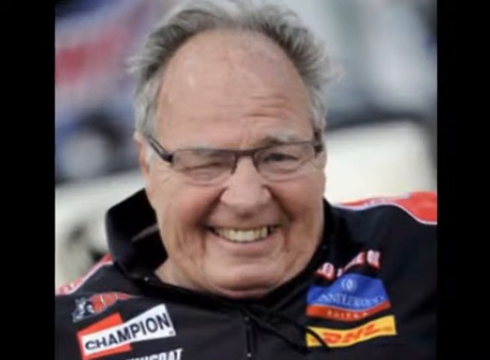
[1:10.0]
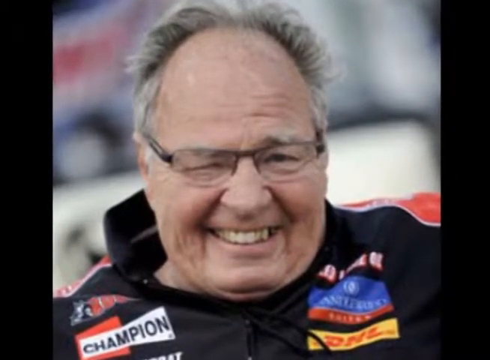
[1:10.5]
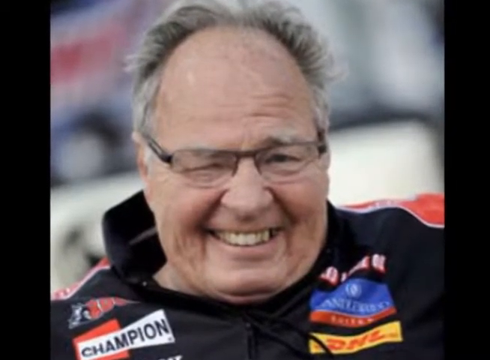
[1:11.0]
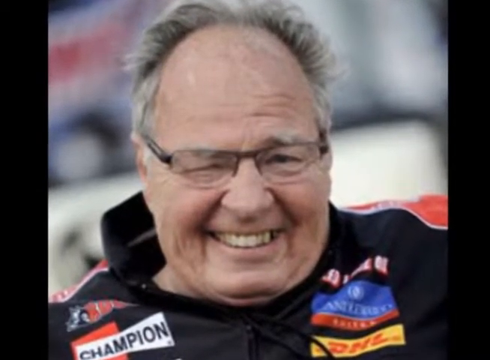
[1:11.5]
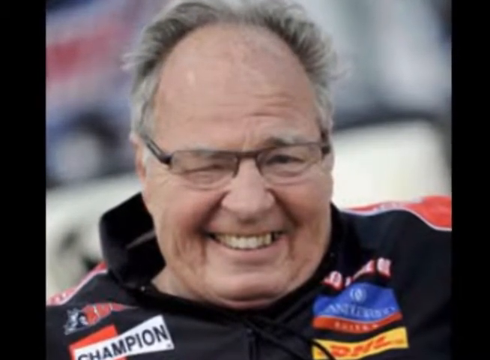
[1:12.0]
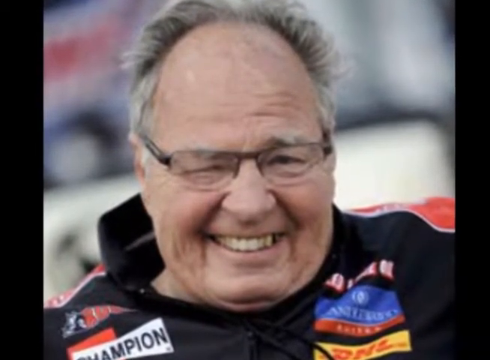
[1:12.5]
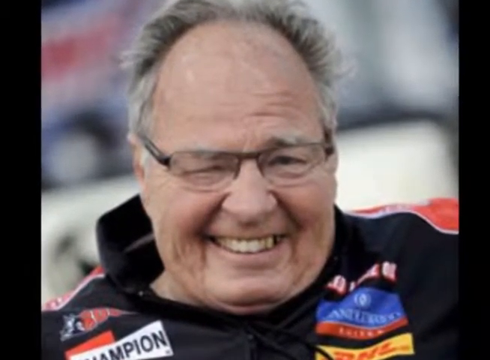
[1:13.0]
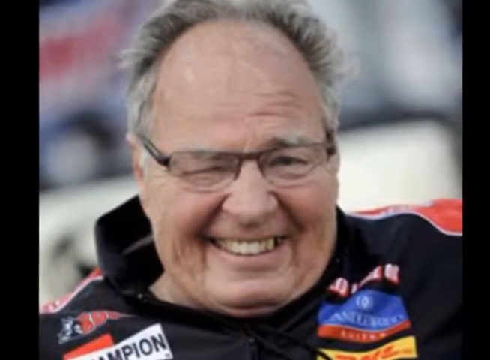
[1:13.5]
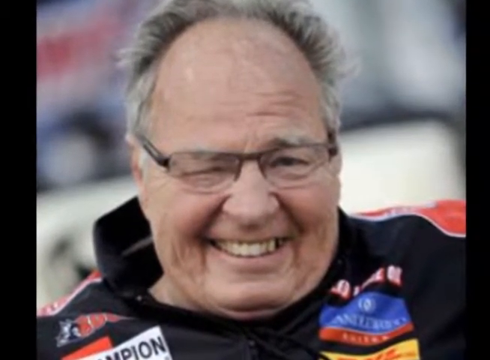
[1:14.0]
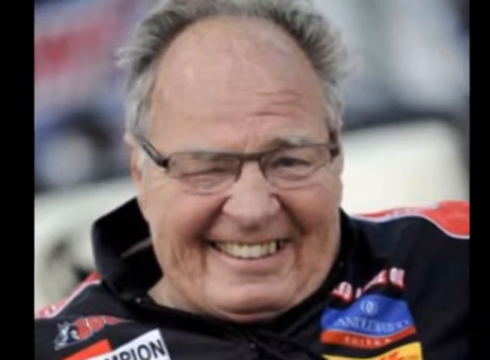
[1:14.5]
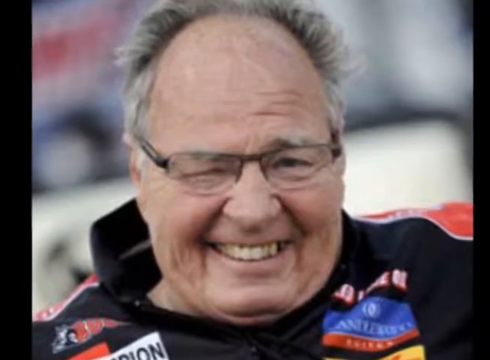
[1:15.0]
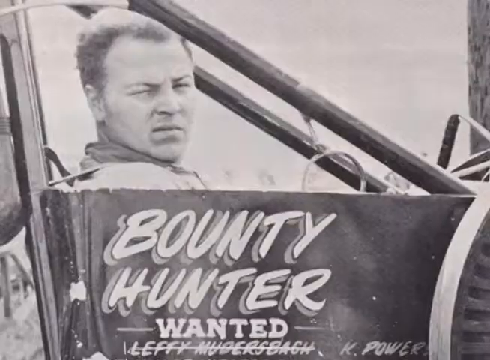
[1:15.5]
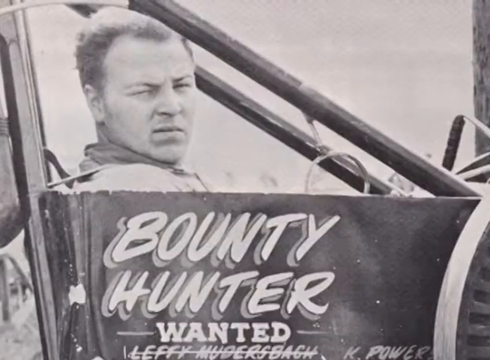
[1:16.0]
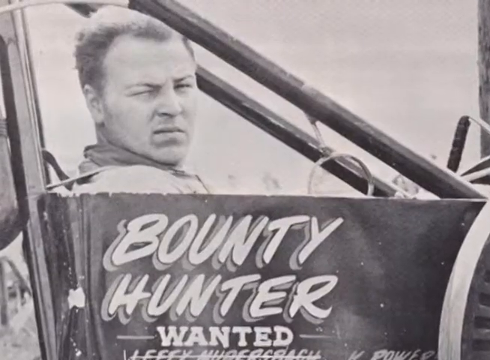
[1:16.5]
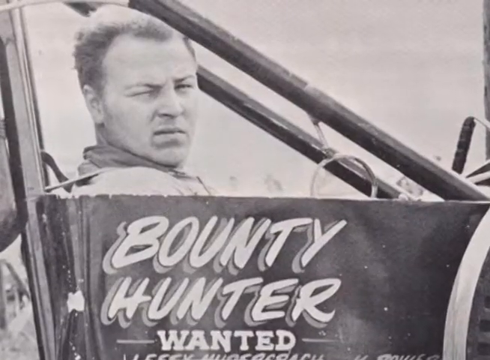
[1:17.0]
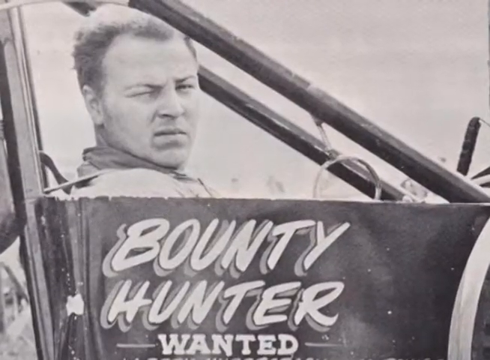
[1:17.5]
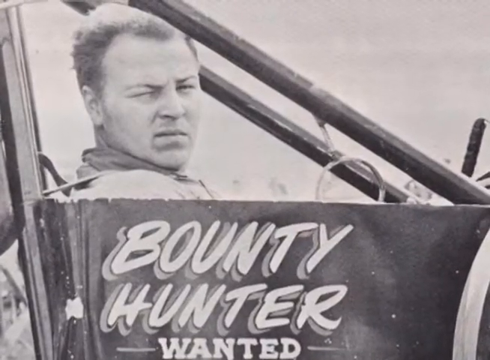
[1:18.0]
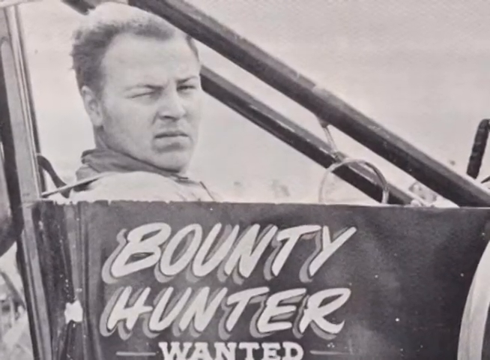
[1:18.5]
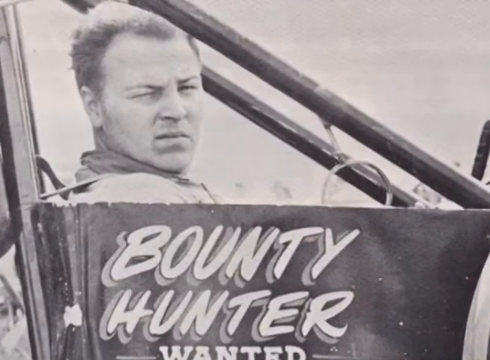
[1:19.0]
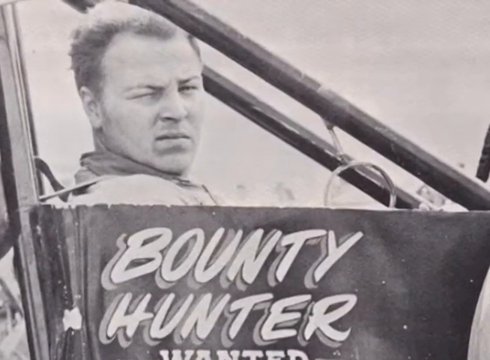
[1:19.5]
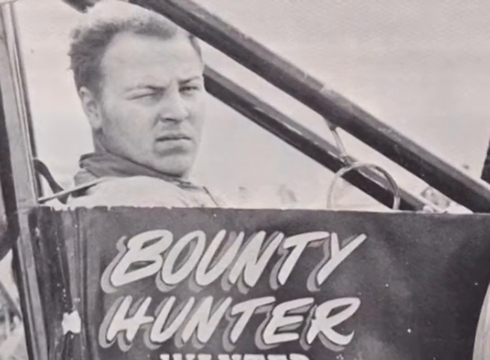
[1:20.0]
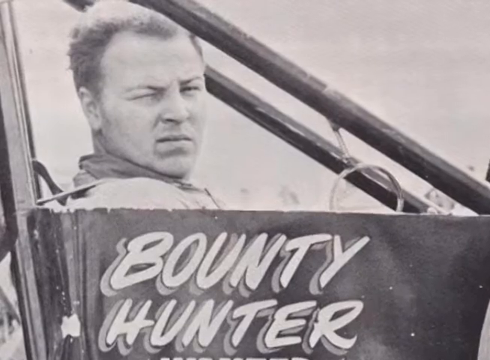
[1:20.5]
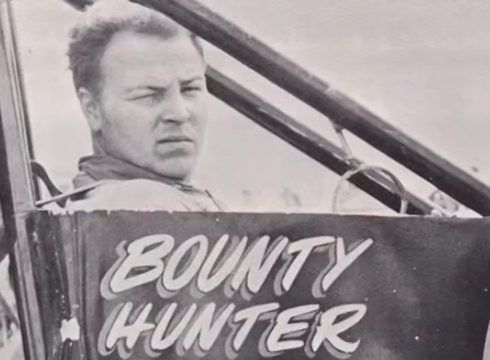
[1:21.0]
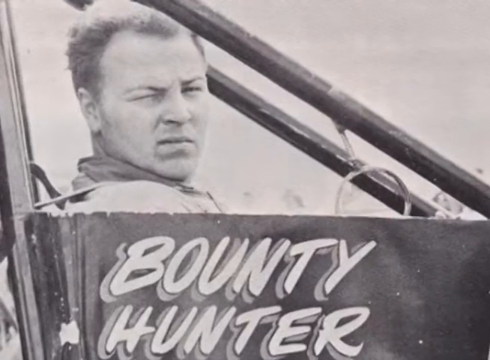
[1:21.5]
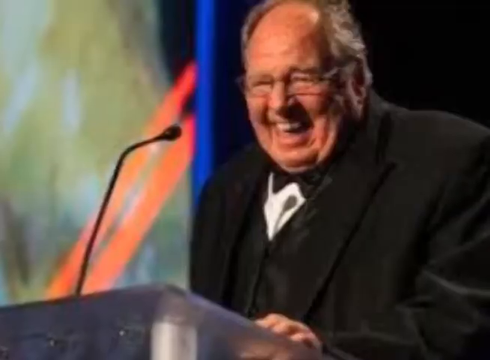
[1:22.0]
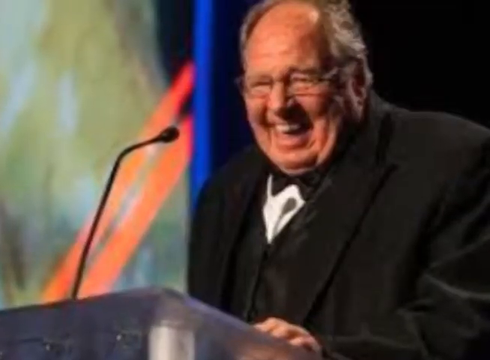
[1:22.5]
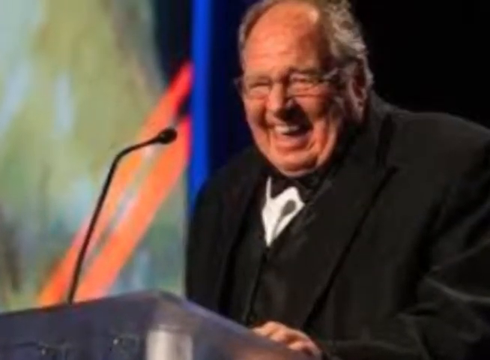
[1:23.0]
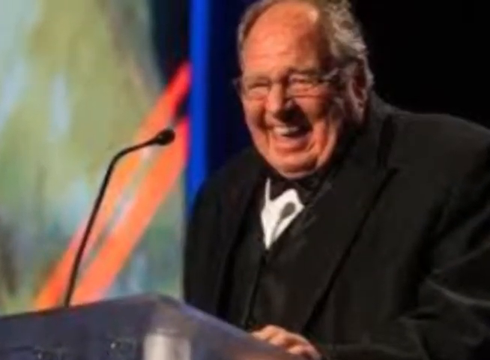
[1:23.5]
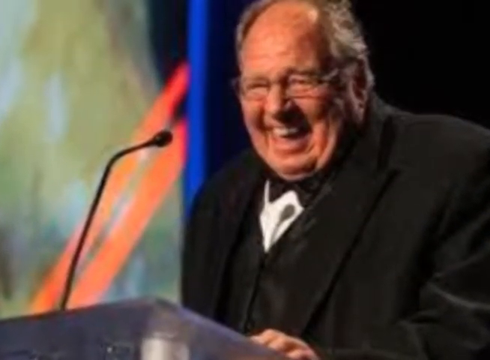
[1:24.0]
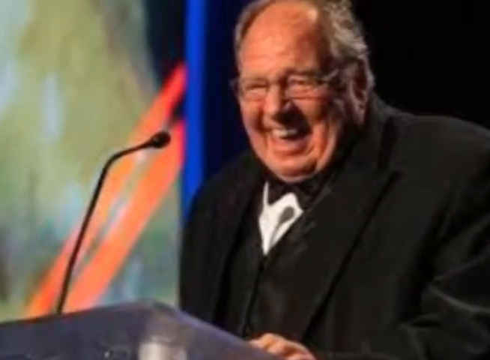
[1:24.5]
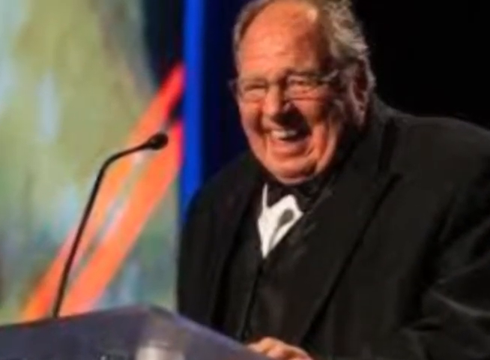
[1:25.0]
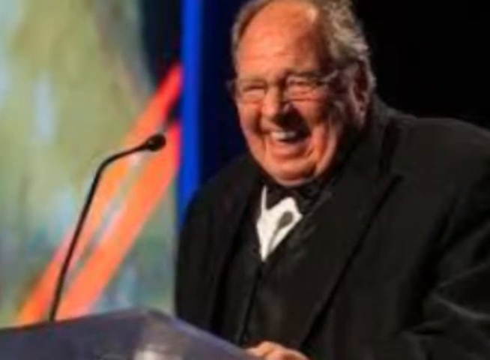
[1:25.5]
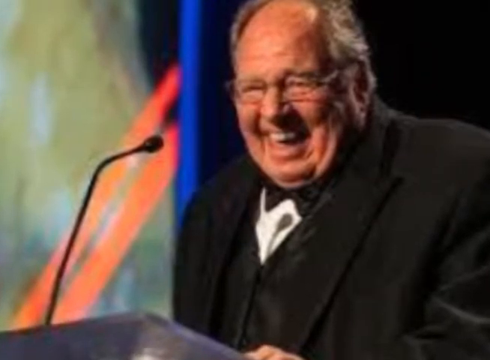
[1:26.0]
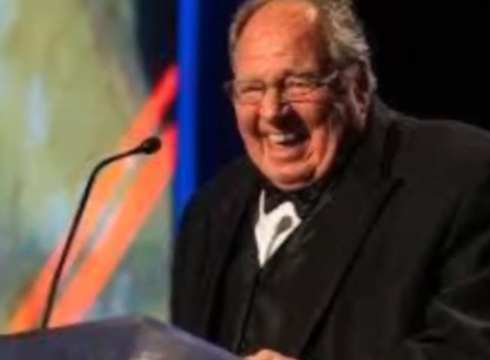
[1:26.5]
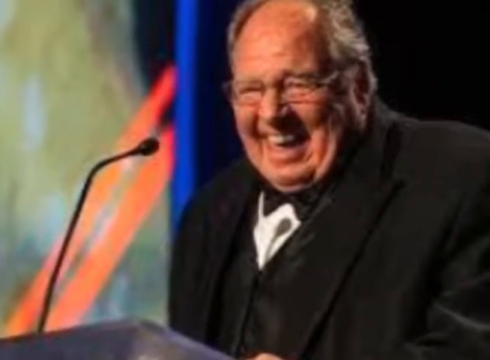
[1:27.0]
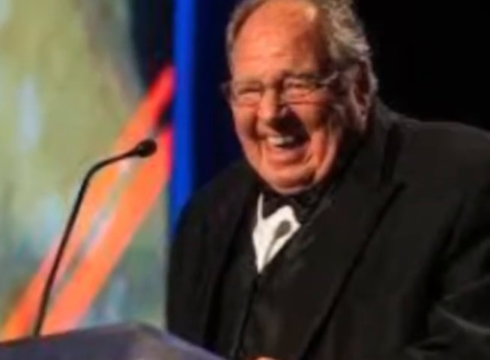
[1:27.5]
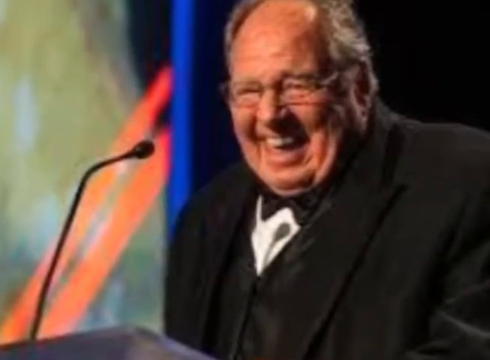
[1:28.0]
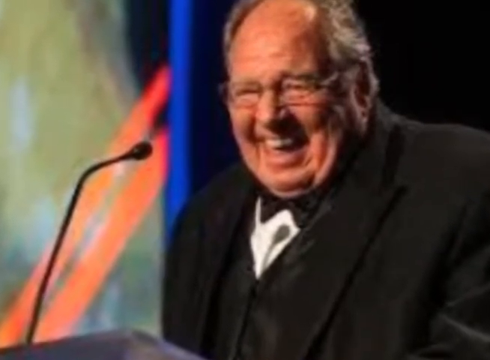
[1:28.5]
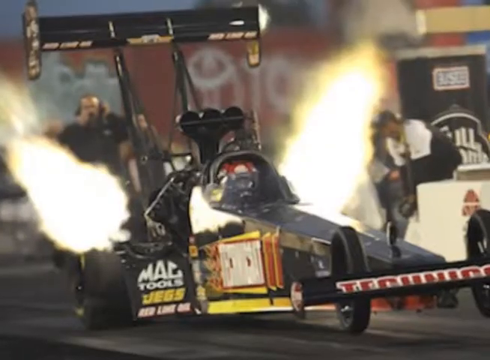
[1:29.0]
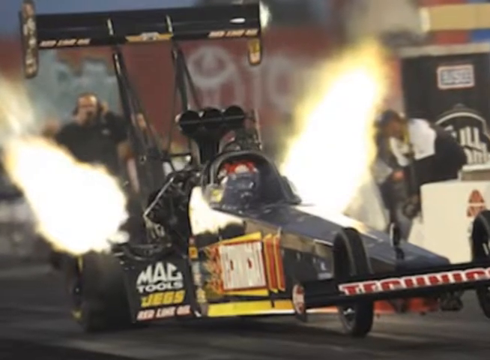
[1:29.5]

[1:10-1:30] Outdoors, an image shows a mature gentleman with a receding hairline, salt and pepper hair and prescription glasses, who looks like he is wearing a NASCAR racing uniform and is all smiles. There is also video of a young man with a receding hairline who looks like he is wearing a NASCAR racing uniform. The video transitions to a black and white photograph, apparently from around the 1950s, of what looks like a race car of some sort. It appears to have a roll cage and no windows, and a single driver looks toward the photographer. The driver appears to be the same elderly man at a younger age, and the writing on the door reads "Bounty Hunter" and "Wanted". The video transitions to the elderly man again, standing at a podium with a microphone in front of him, all smiles, wearing a black suit, a black vest, a white shirt and a black bowtie. The video then transitions to a racetrack where a dragster spins its wheels, with fire and smoke coming off the pavement beneath them.